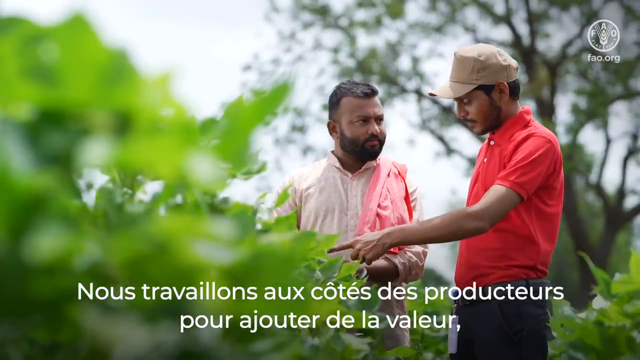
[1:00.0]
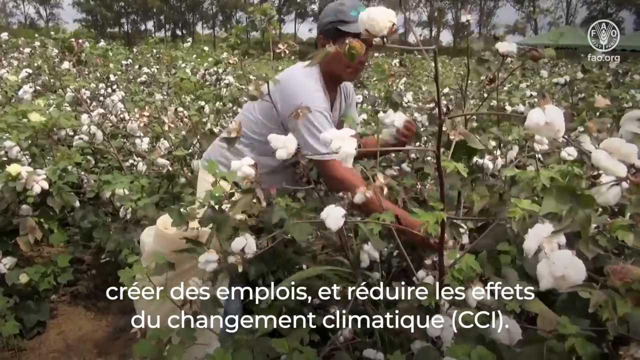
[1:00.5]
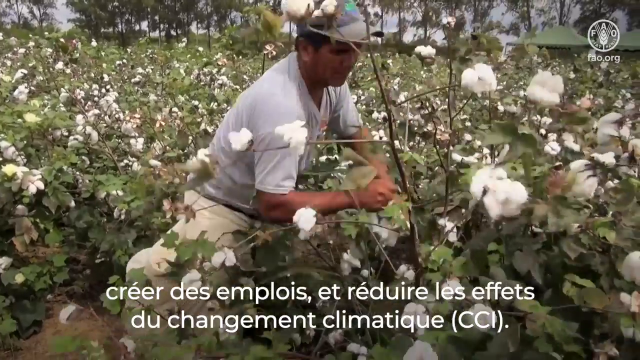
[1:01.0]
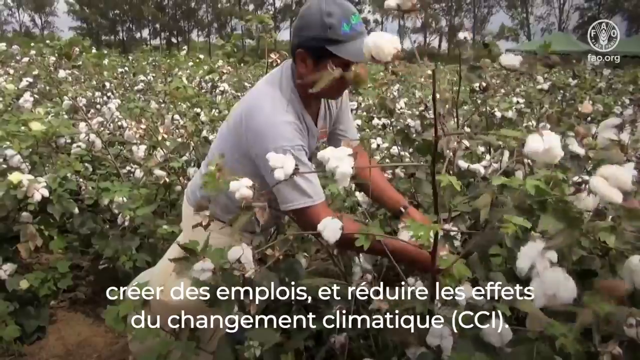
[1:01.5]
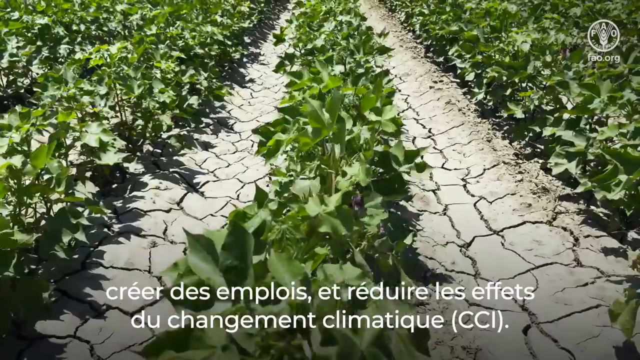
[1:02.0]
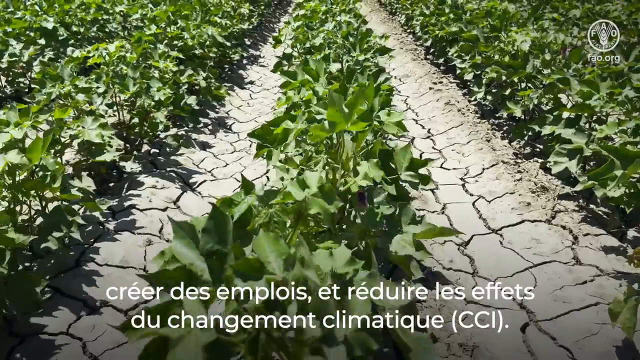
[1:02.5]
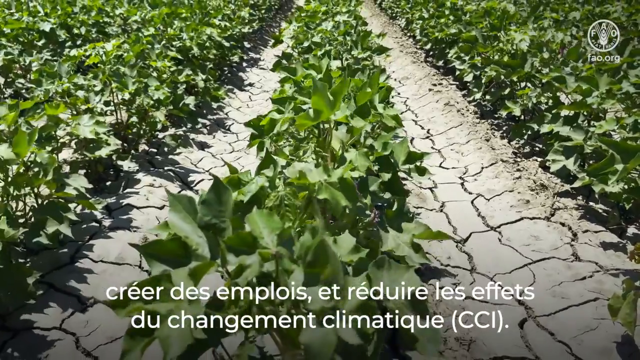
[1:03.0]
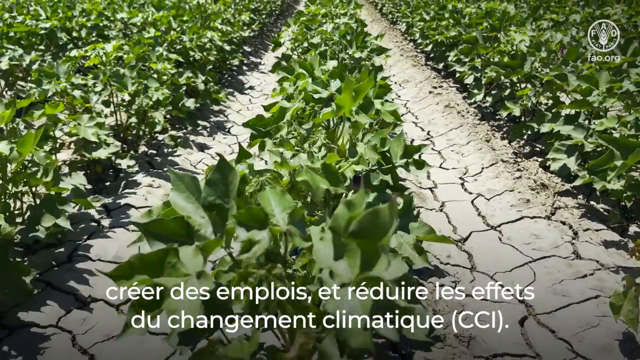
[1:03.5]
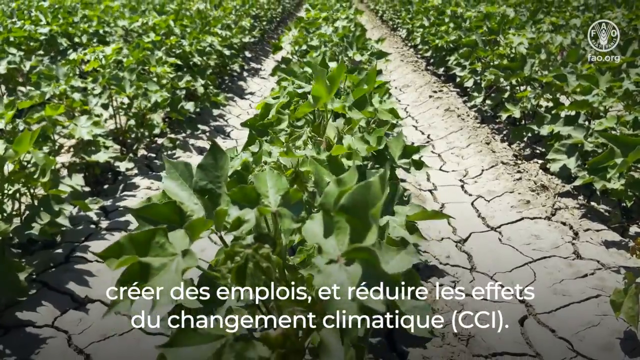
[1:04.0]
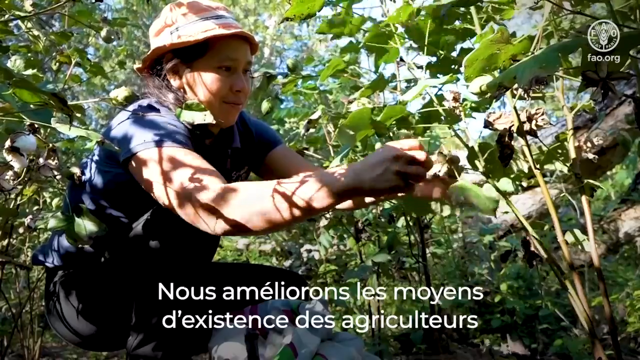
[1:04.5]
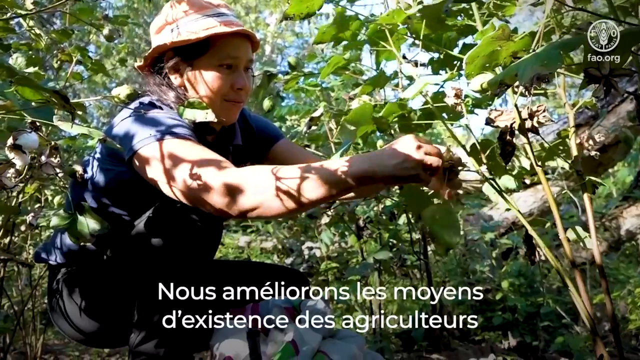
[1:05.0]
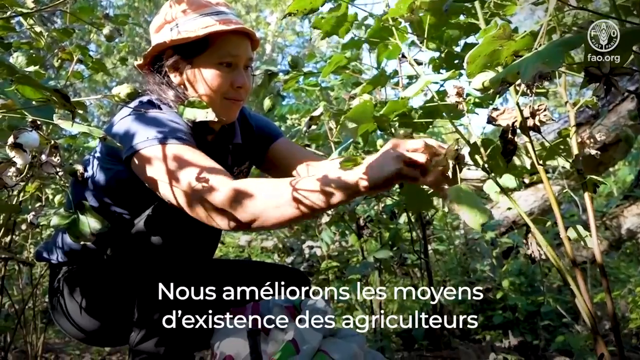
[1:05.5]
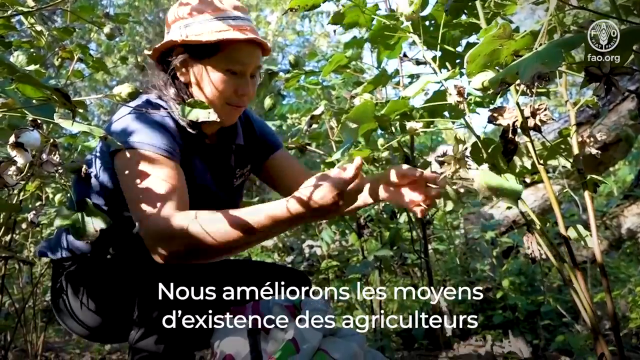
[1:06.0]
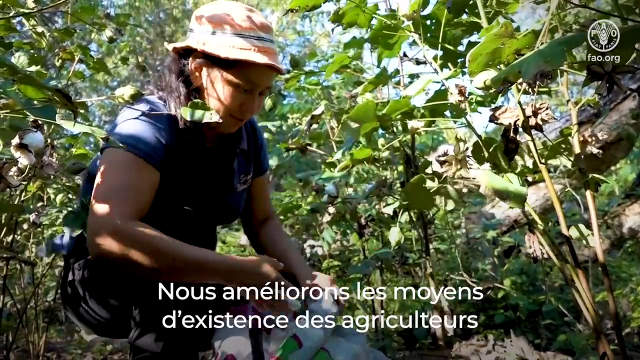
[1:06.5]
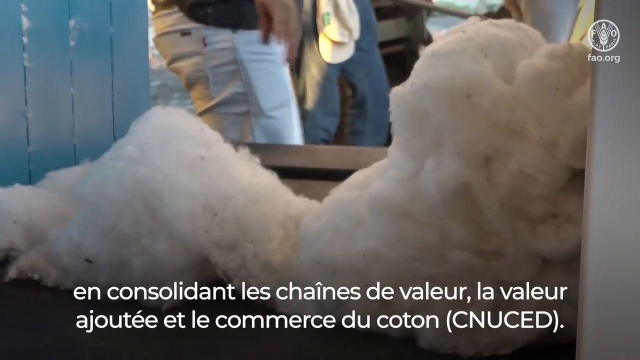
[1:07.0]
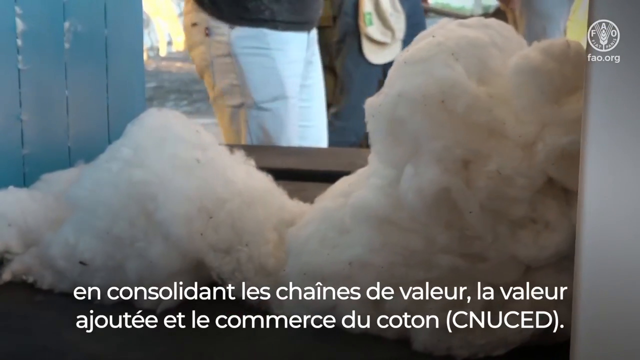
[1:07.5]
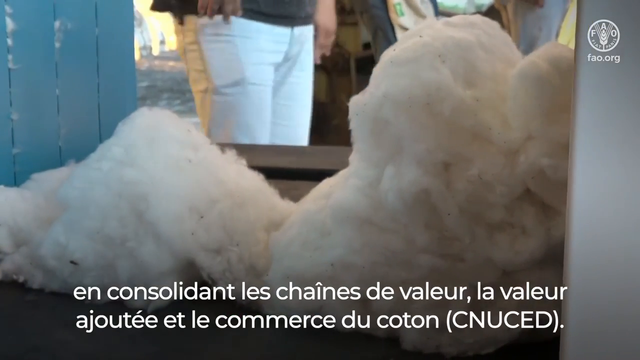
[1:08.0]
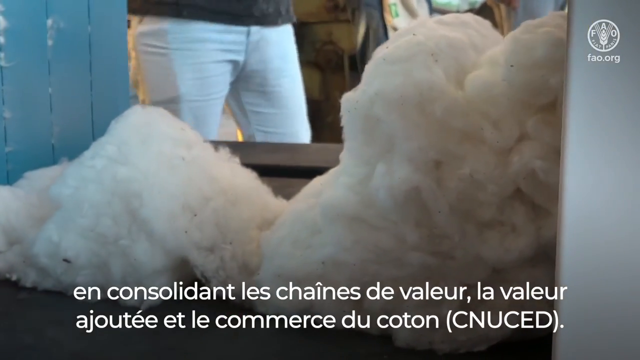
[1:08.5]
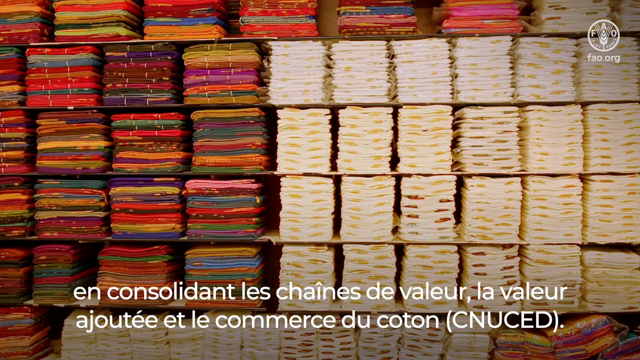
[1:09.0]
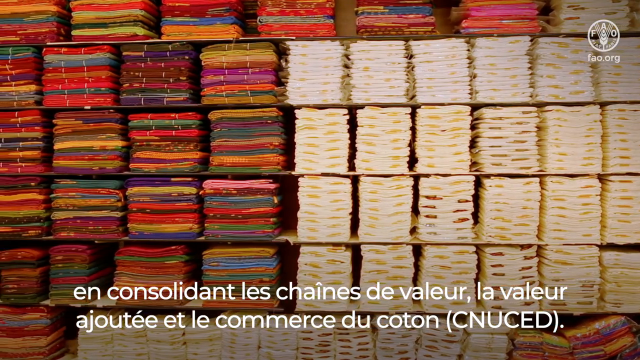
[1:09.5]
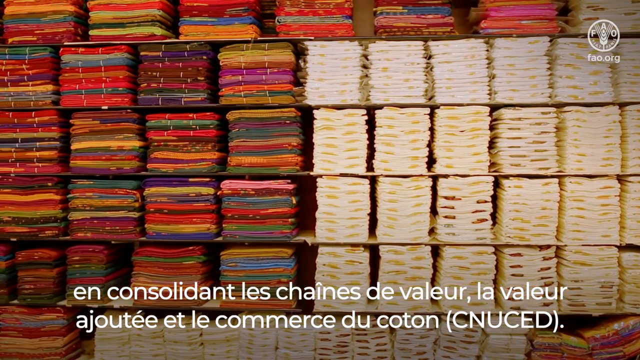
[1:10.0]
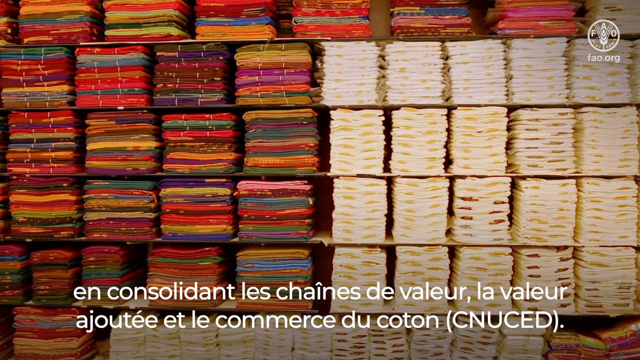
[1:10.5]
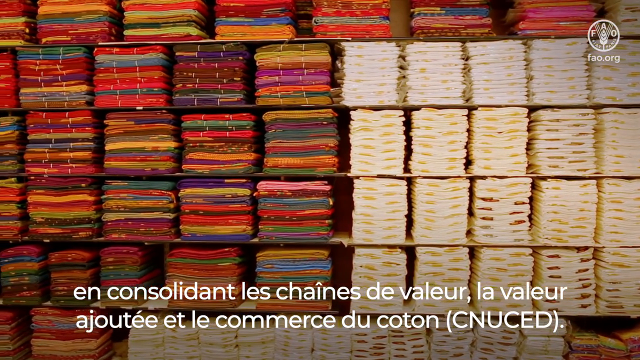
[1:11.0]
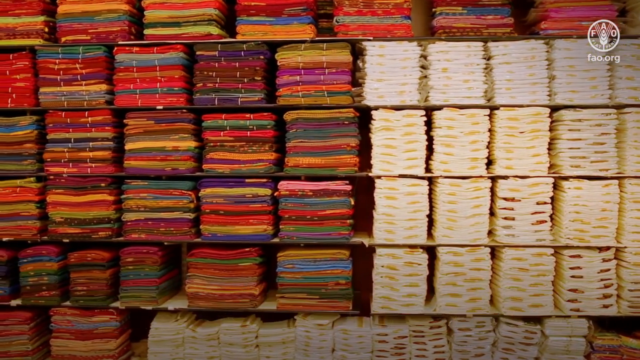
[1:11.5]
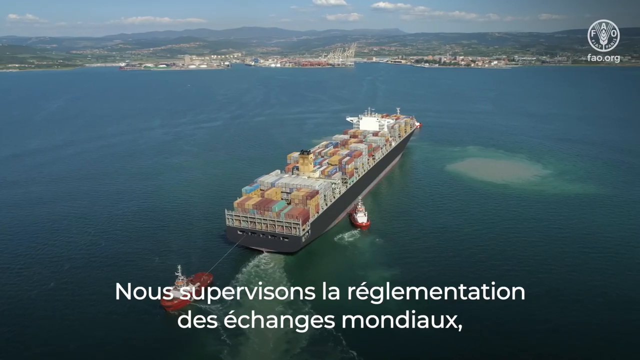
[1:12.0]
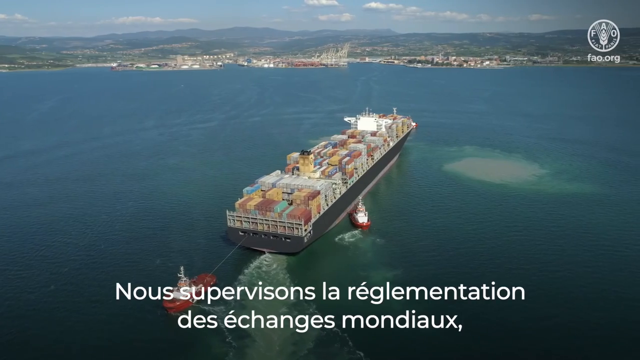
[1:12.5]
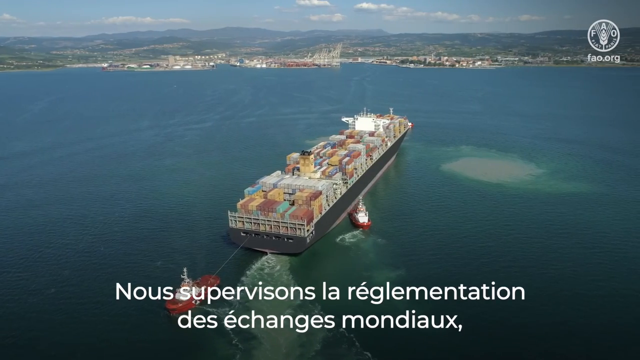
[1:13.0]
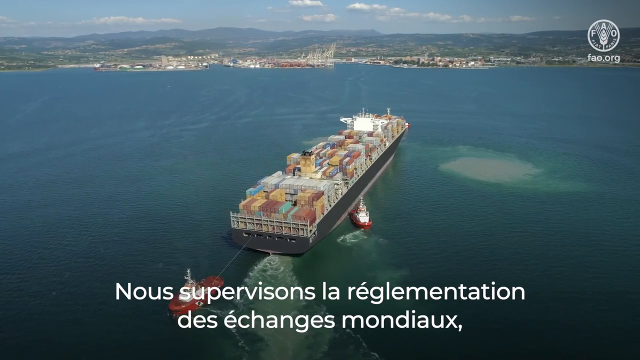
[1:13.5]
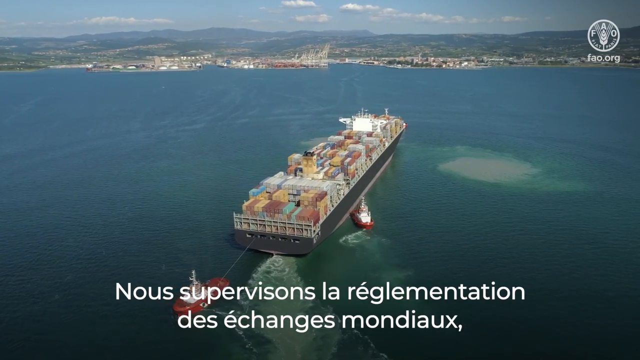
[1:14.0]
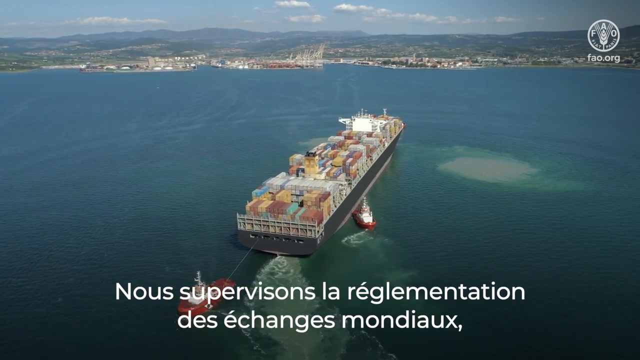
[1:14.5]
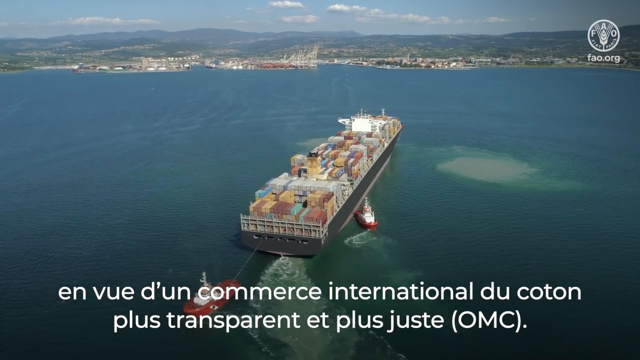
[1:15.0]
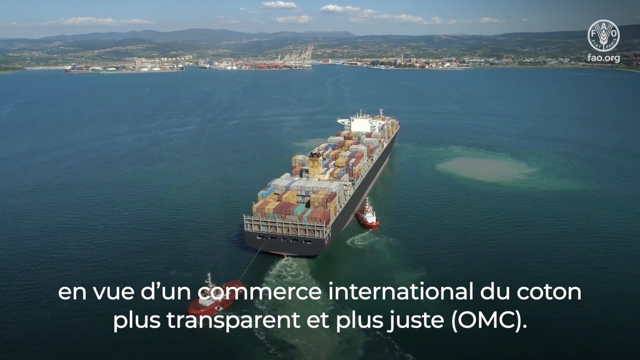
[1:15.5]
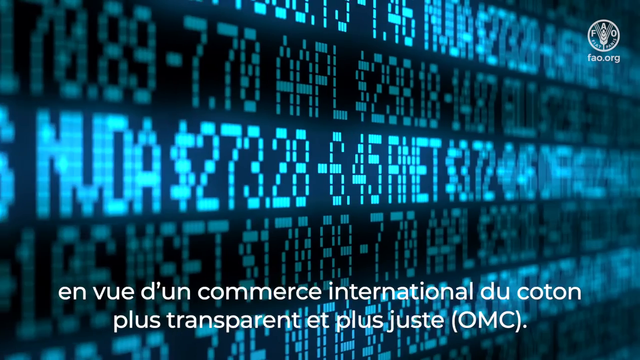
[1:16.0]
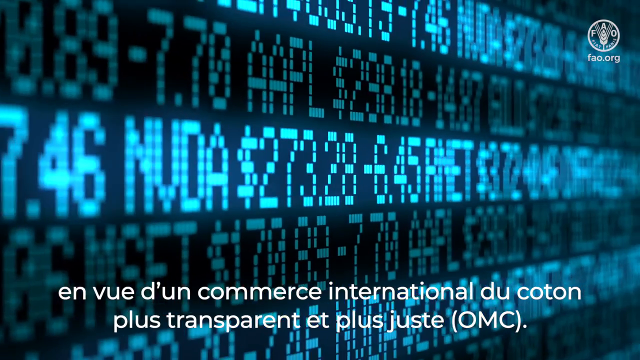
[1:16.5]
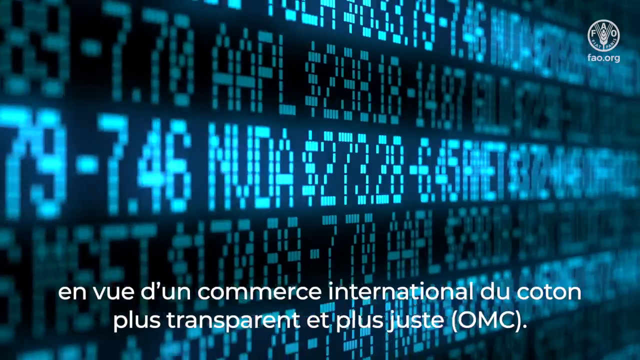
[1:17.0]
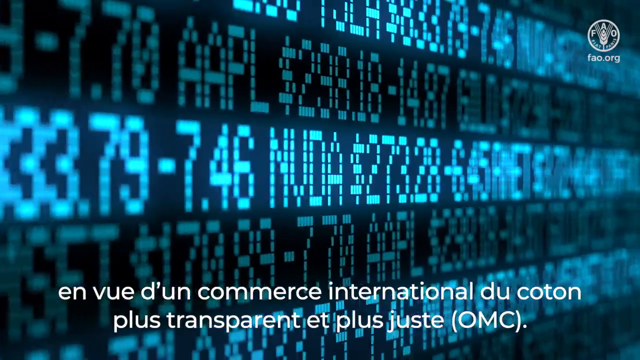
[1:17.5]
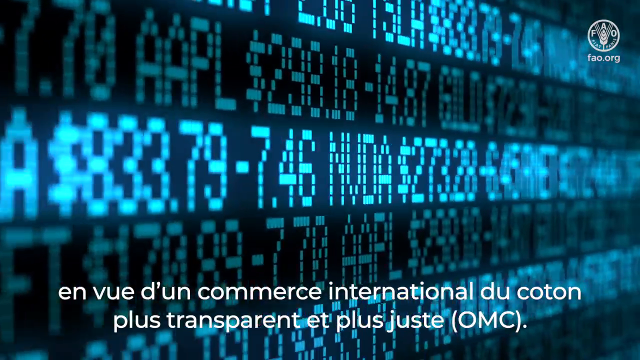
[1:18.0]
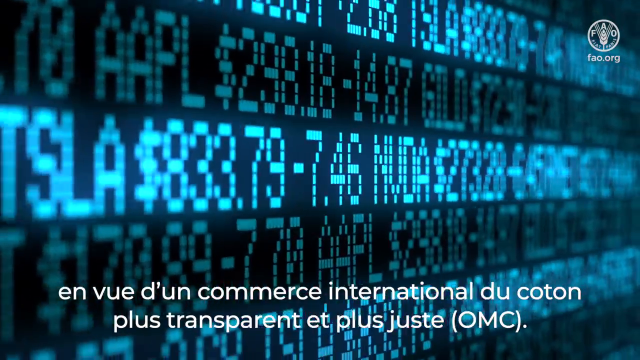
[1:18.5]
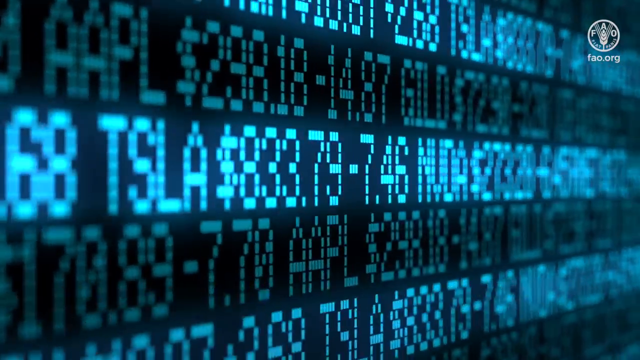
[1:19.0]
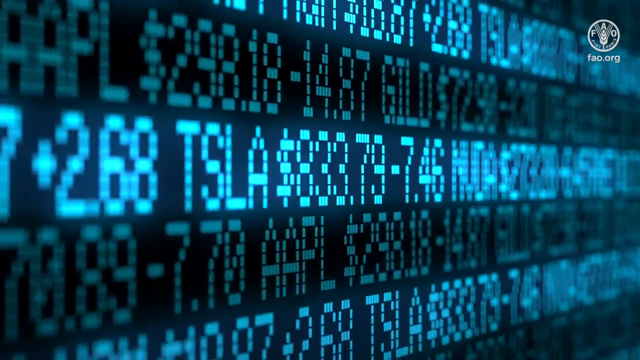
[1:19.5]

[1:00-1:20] A man in a gray baseball cap in the middle of the field furiously picks at different cotton balls. The video transitions to a woman in an orange bucket hat and a navy blue short-sleeve t-shirt who also picks through some of the cotton, much more gently with the plants. Next comes a zoomed-in close-up shot of barrels of cotton; two piles of picked cotton are sitting inside some type of wooden basket. Then a wall of textiles in different colors of cloth appears. On the left side are stacks of multicolored cloth, with at least four columns visible in multiple different colors, while on the right side the cloth seems to be organized into whites, yellows, and reds, in six columns of similar color. The video then pans to an overhead shot of a boat that seems to be shipping these textiles. A city line is visible in the far background, along with some mountains, and the weather seems relatively sunny with a couple of clouds in the sky.